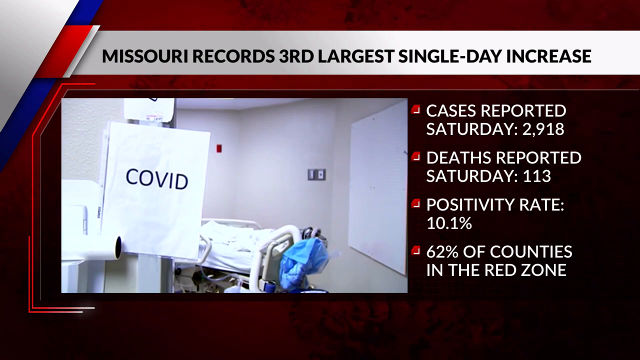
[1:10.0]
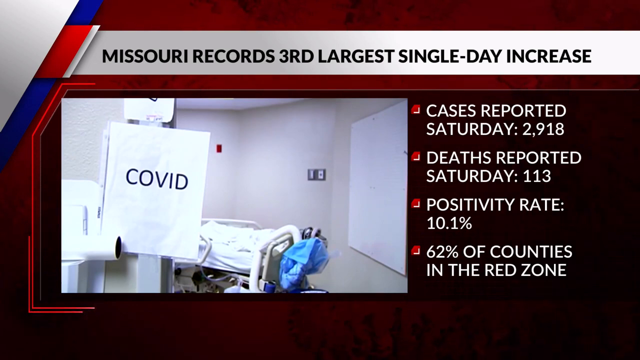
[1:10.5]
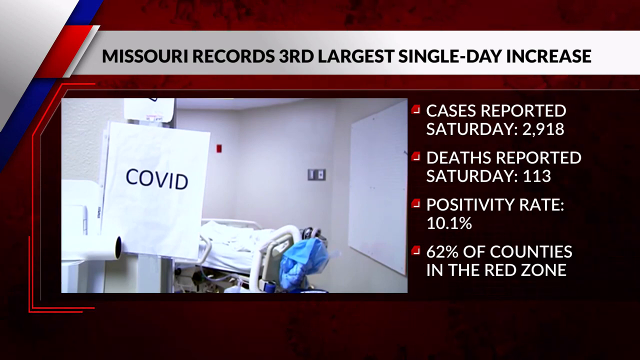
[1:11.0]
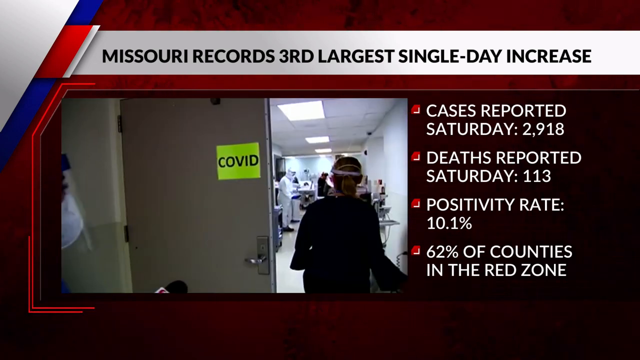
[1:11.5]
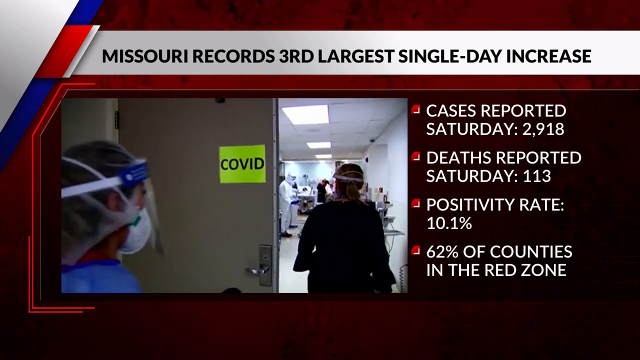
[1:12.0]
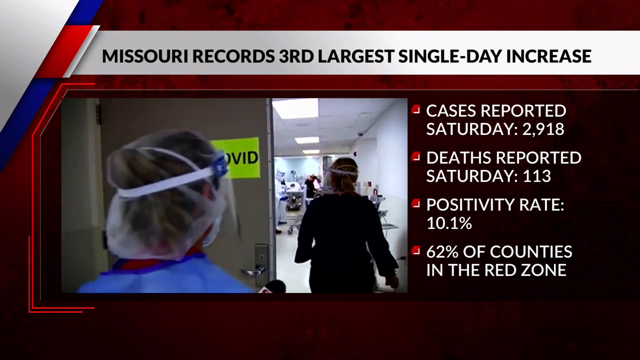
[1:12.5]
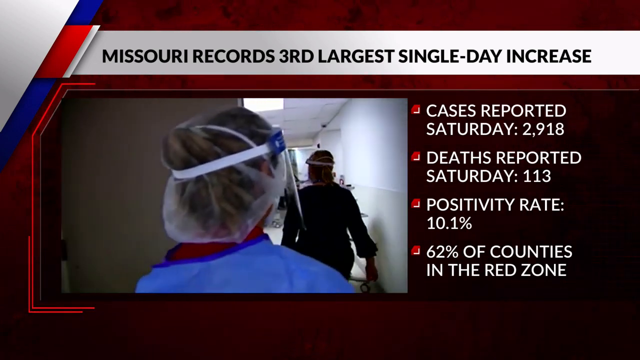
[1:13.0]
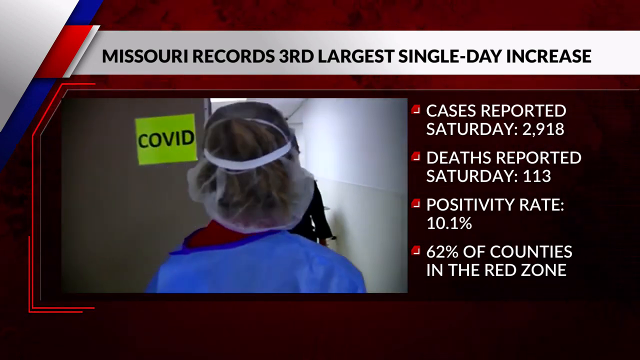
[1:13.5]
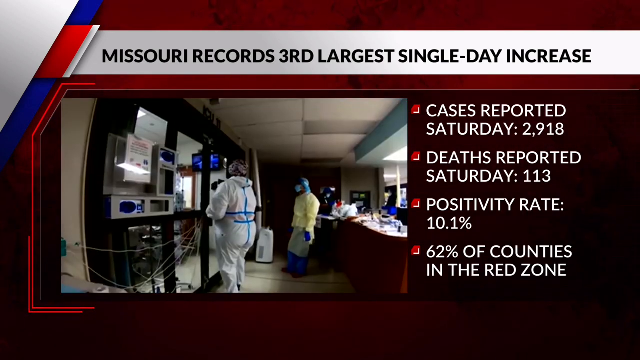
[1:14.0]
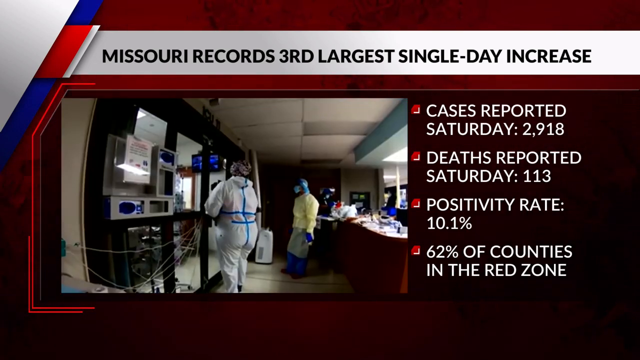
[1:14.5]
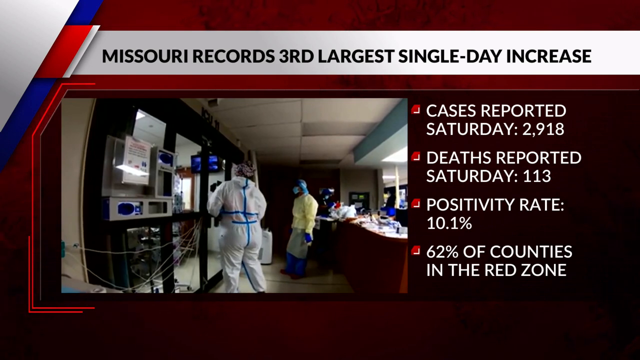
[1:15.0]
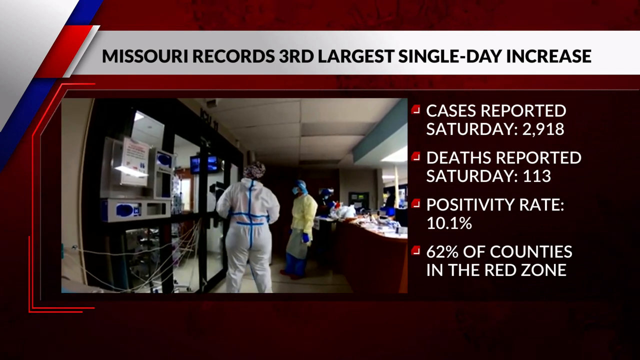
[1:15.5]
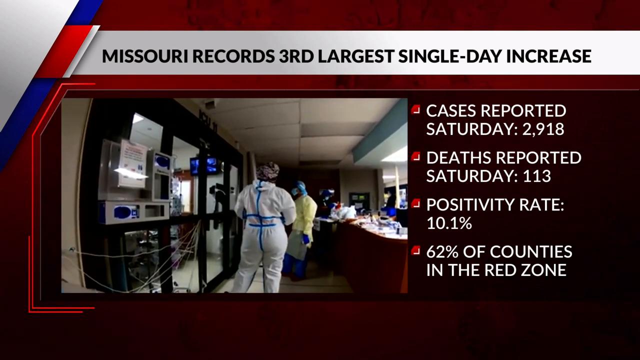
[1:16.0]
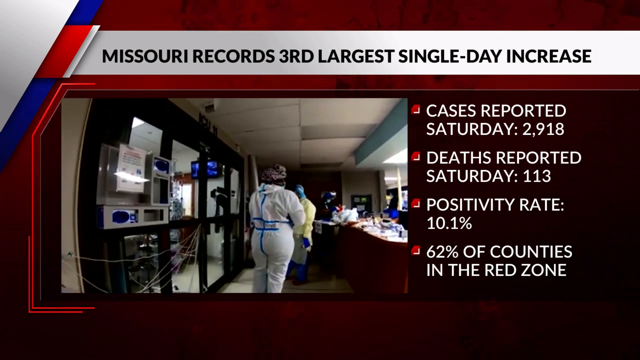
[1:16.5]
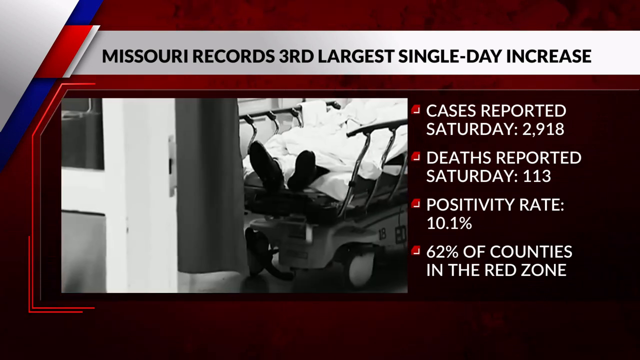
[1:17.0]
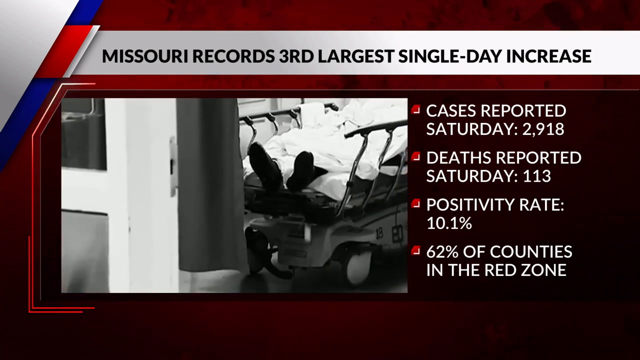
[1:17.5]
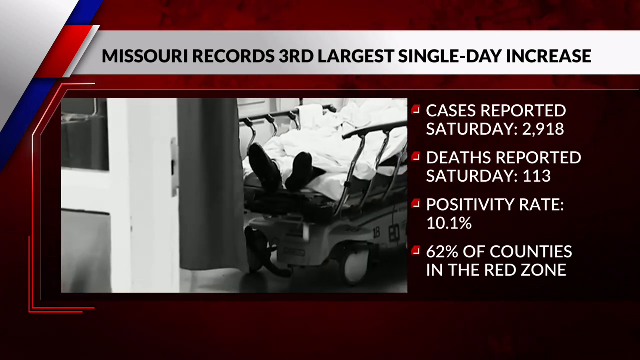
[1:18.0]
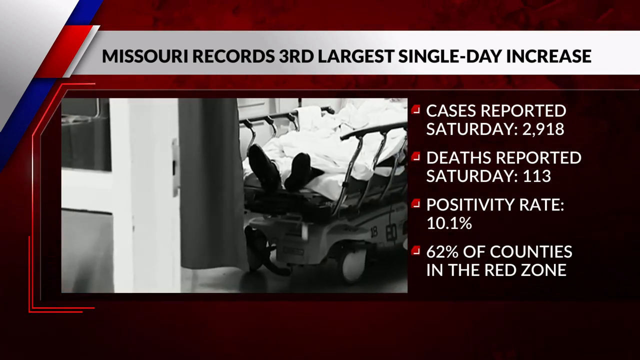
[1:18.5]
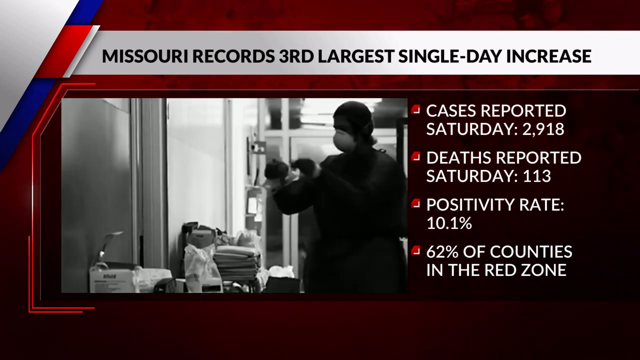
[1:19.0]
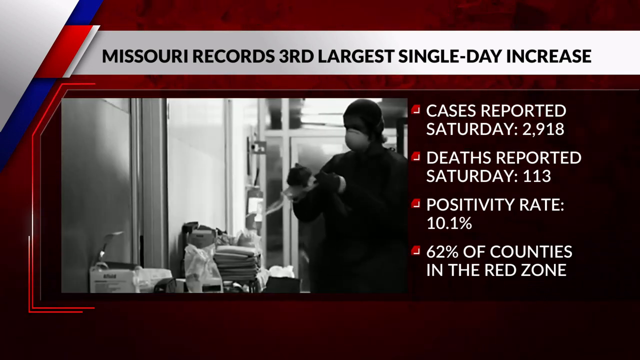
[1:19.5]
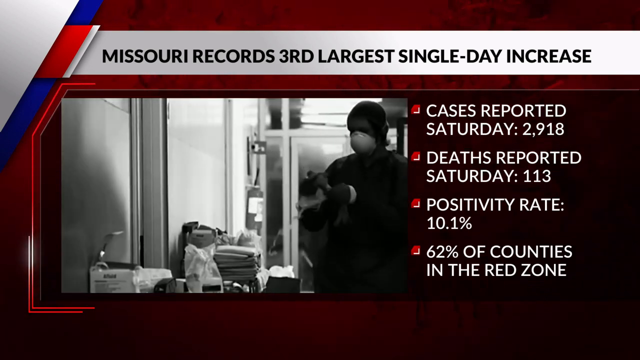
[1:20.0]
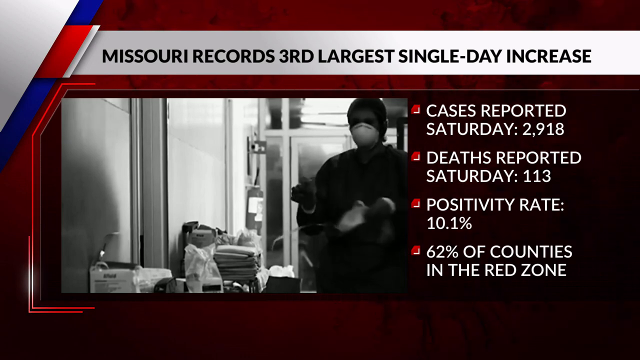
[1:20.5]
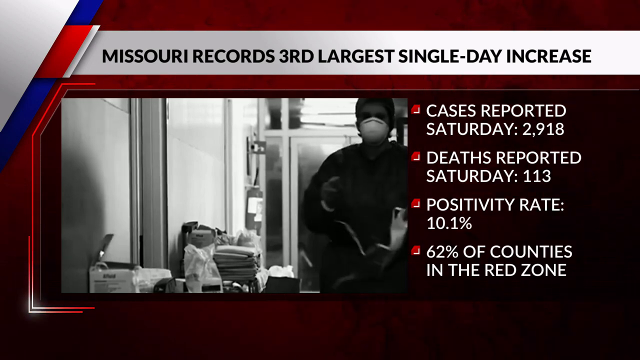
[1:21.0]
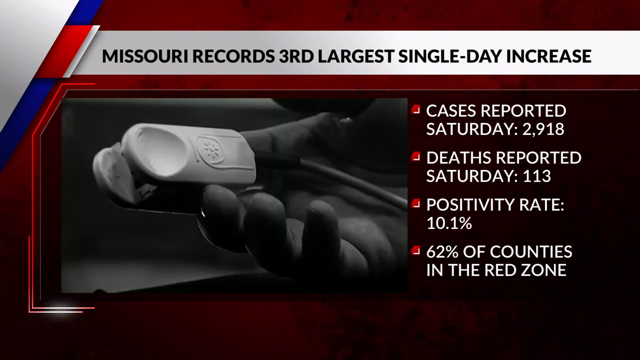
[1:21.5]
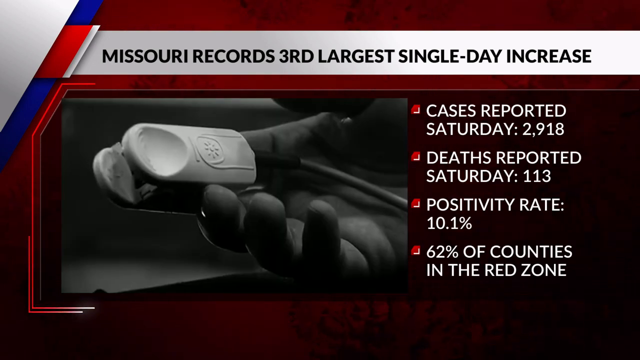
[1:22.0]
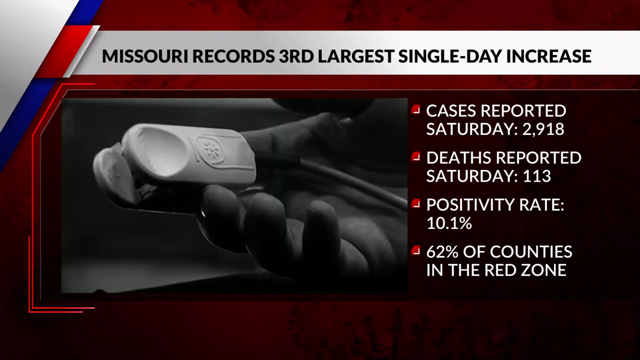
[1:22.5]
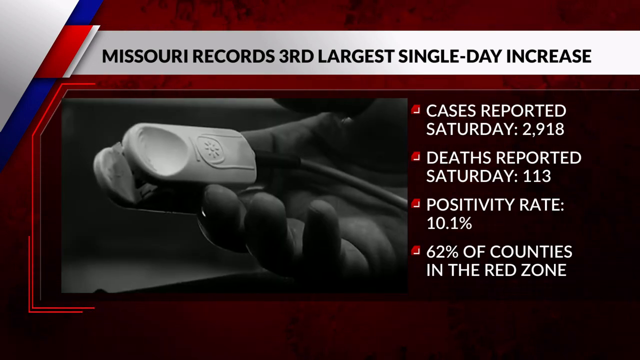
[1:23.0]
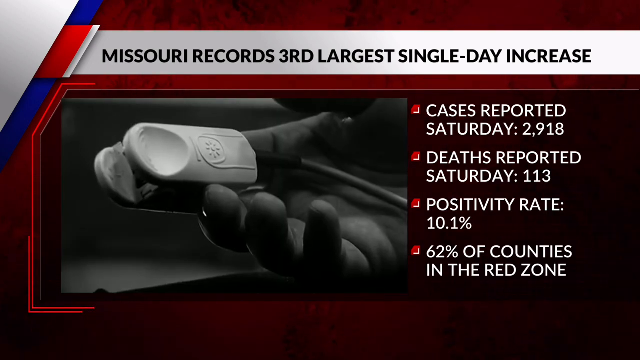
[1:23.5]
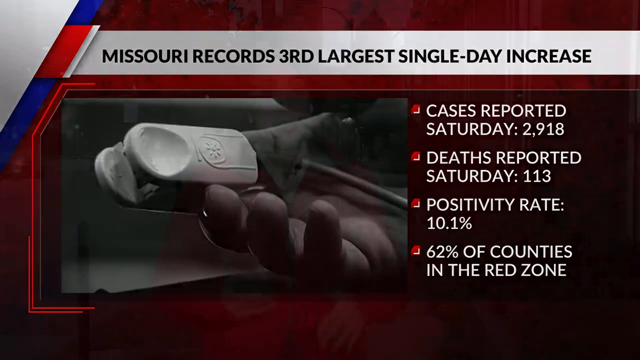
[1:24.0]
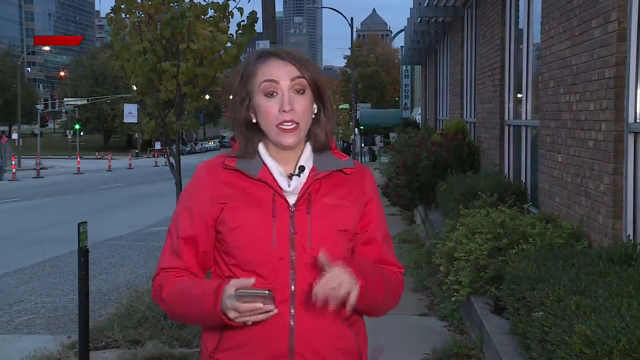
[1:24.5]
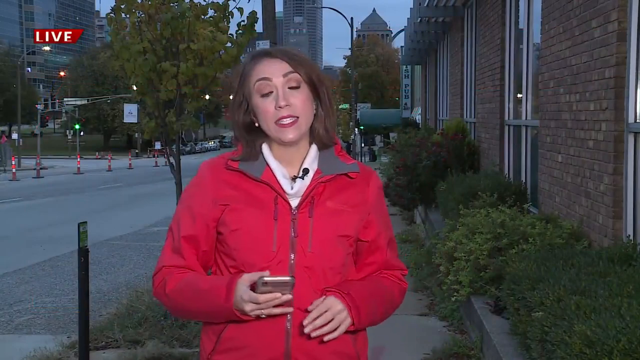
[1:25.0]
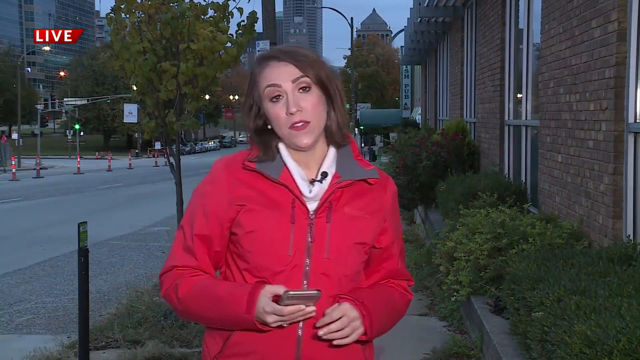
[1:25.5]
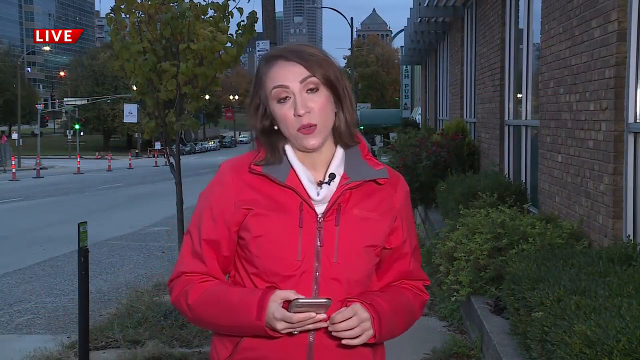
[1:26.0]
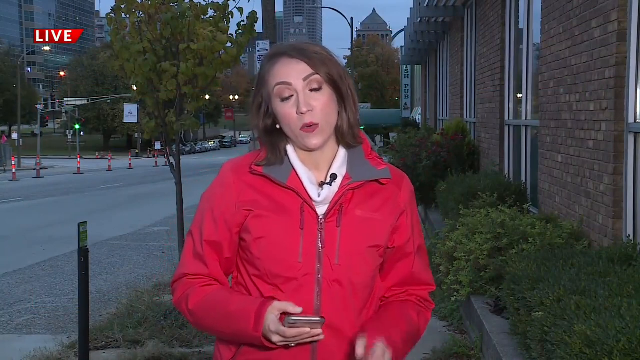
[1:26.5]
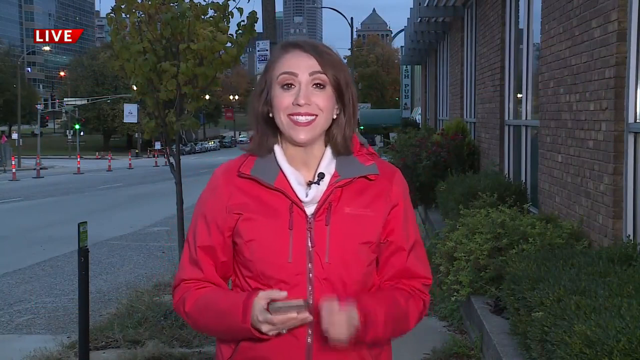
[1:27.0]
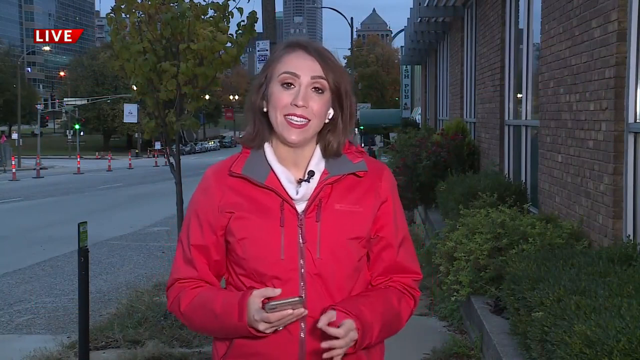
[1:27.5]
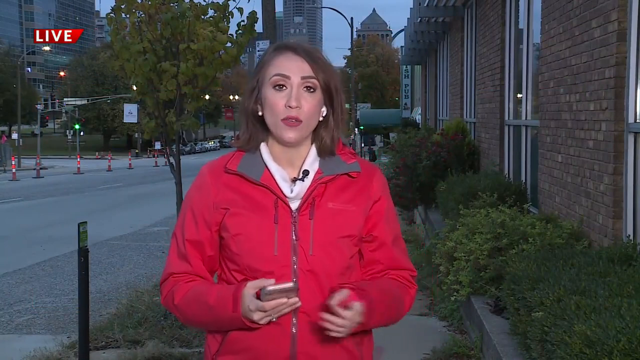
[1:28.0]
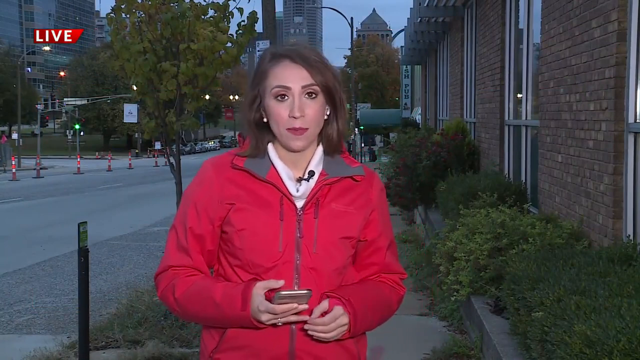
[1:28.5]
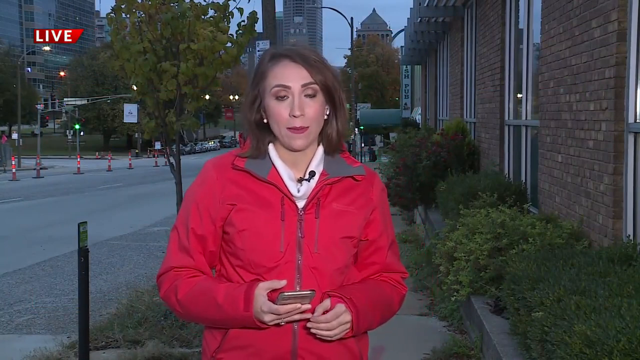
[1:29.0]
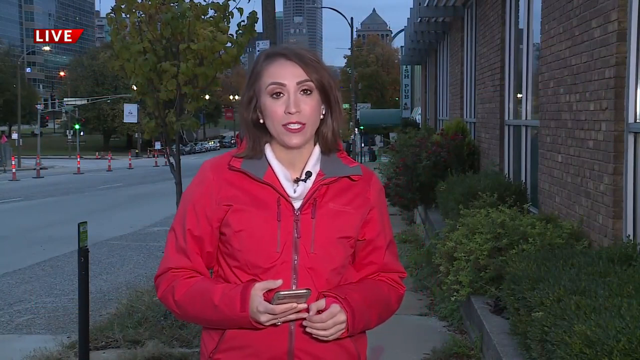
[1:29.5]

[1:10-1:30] In a hospital, a door has a label reading "COVID". Nurses in full protective gear, including masks, head coverings and clothing coverings, walk into a ward with people in it, with the death toll written next to it. They are then in what appears to be a lab, wearing white overalls covering the whole body. Someone lies on a sickbed with machines connected to them, breathing through an oxygen provider. The woman reporter shown at the start then appears in a red jacket, along with text stating that Missouri has 62 percent of counties in the red zone.